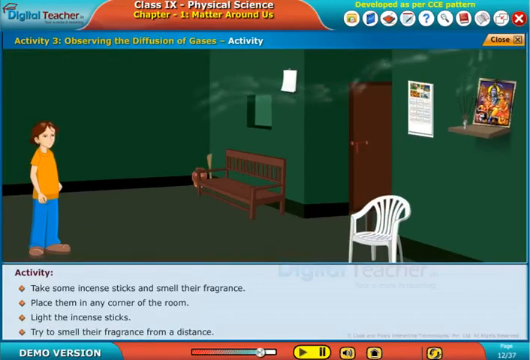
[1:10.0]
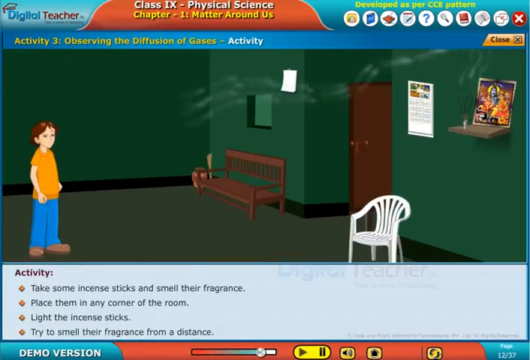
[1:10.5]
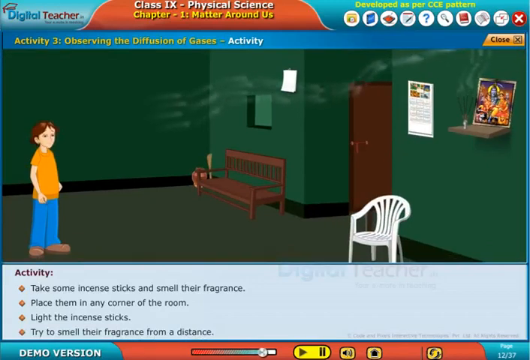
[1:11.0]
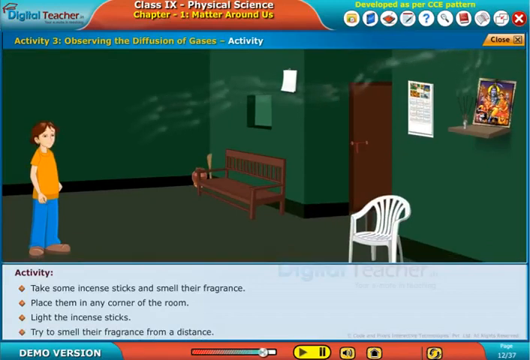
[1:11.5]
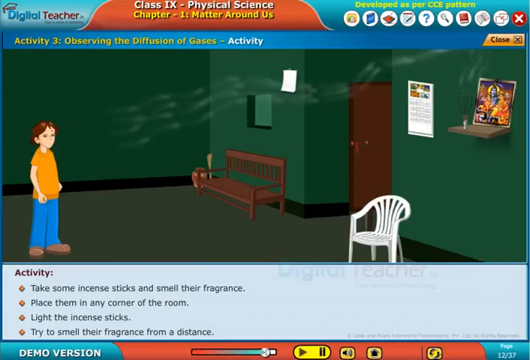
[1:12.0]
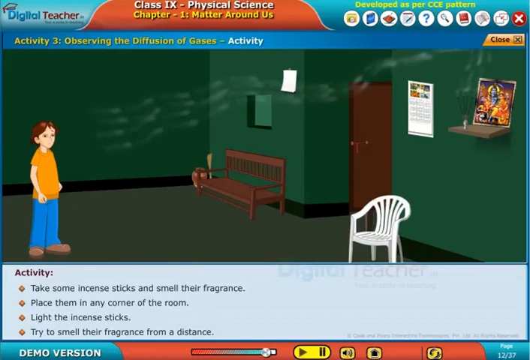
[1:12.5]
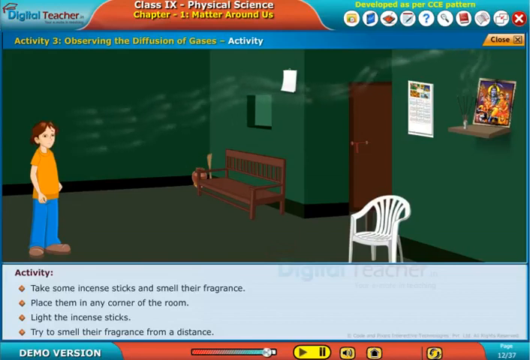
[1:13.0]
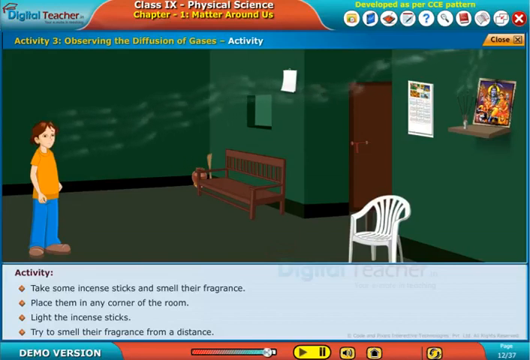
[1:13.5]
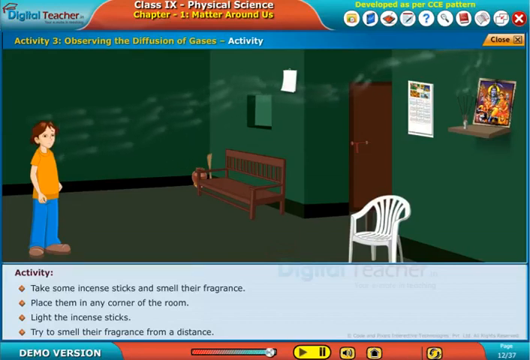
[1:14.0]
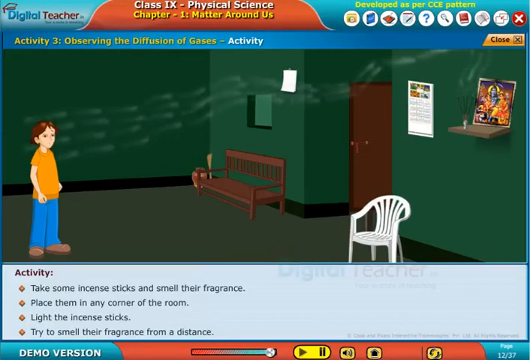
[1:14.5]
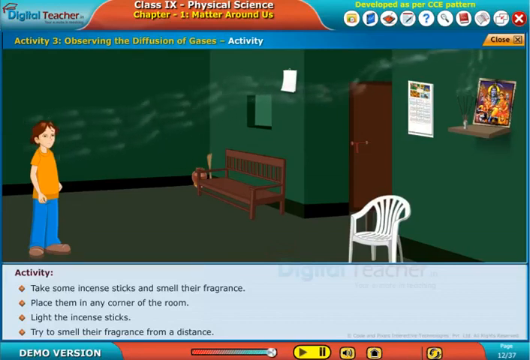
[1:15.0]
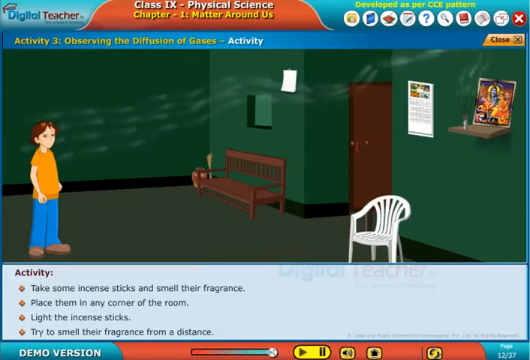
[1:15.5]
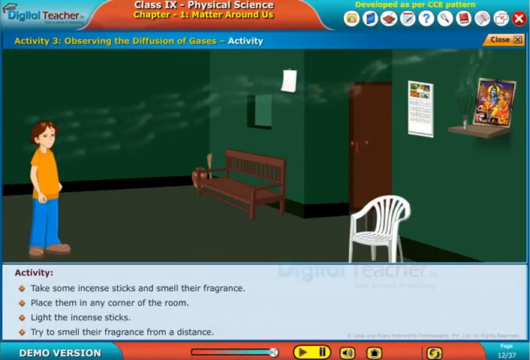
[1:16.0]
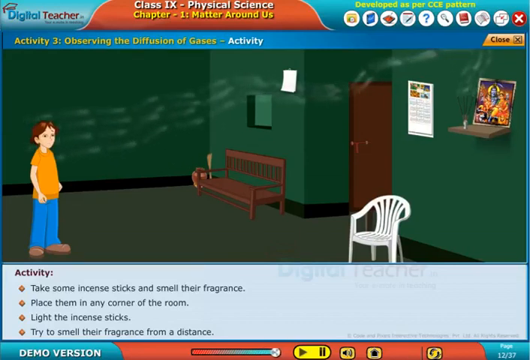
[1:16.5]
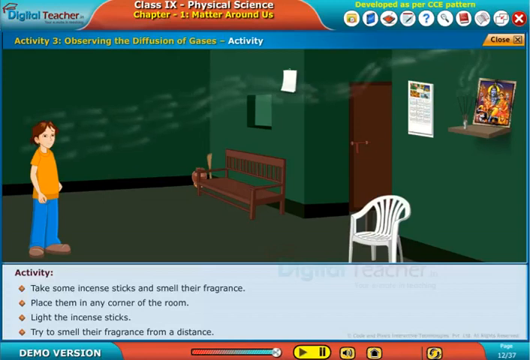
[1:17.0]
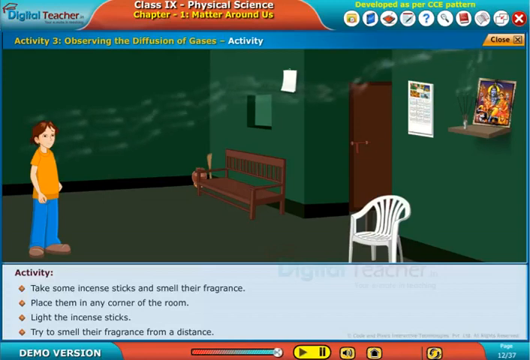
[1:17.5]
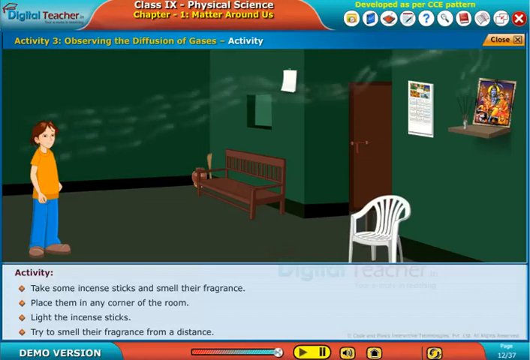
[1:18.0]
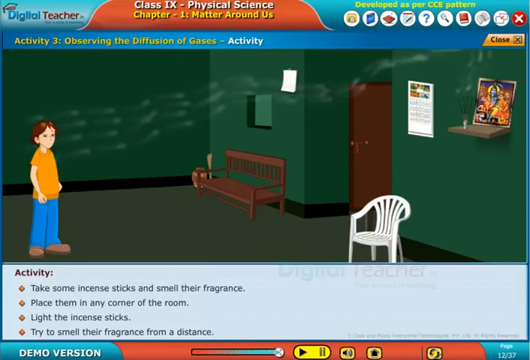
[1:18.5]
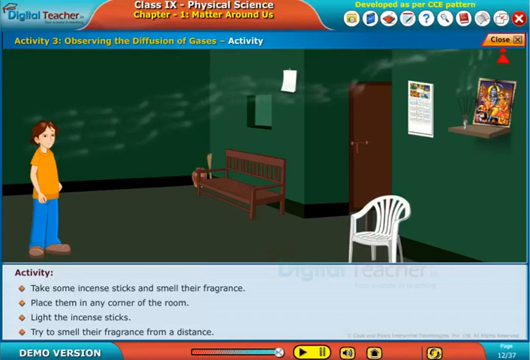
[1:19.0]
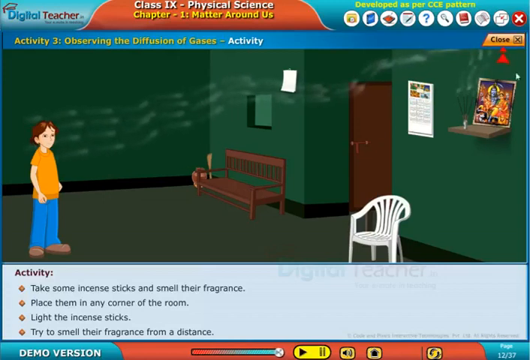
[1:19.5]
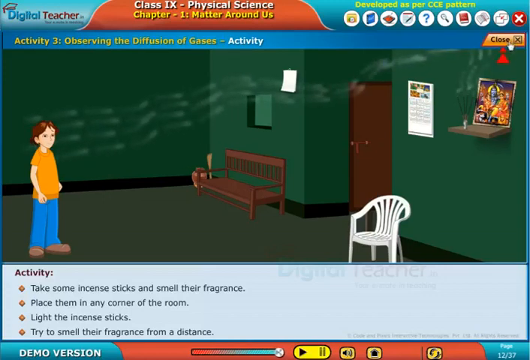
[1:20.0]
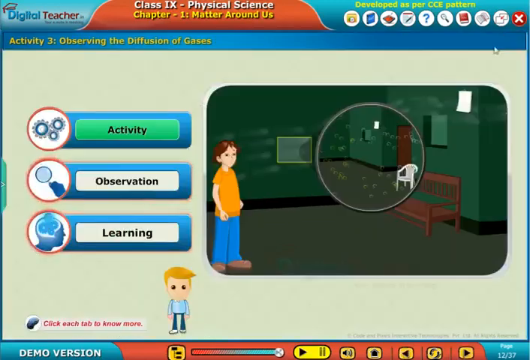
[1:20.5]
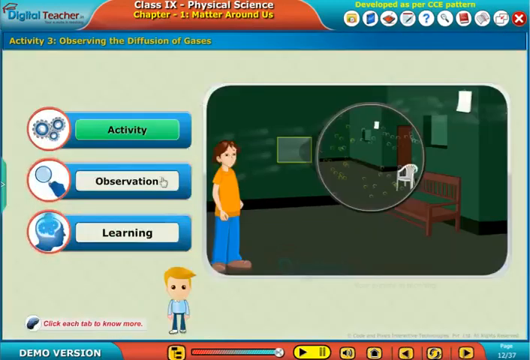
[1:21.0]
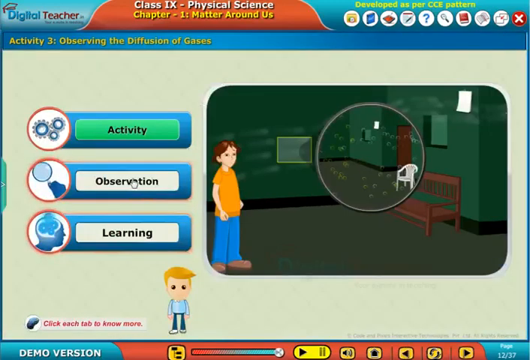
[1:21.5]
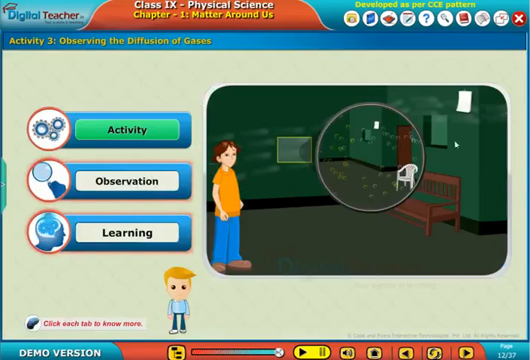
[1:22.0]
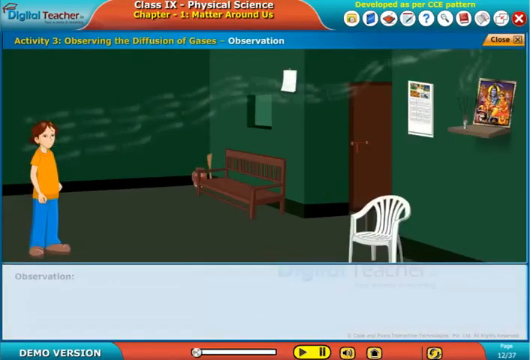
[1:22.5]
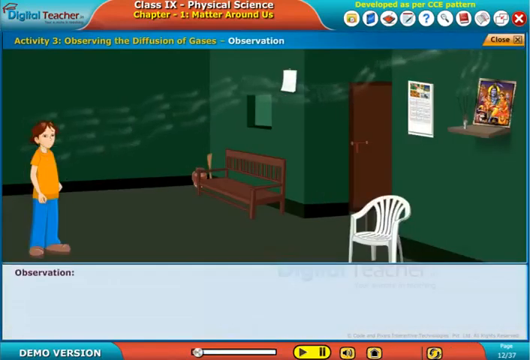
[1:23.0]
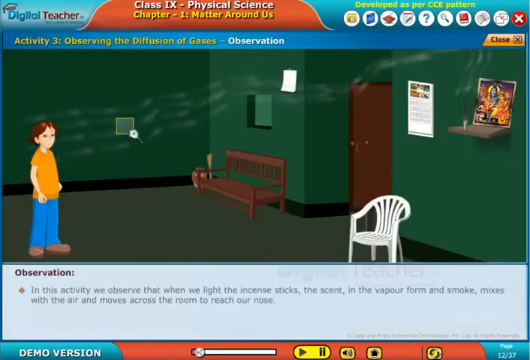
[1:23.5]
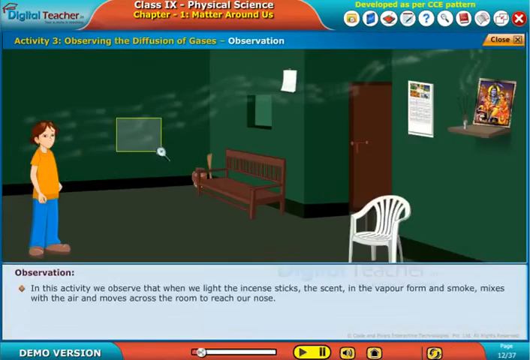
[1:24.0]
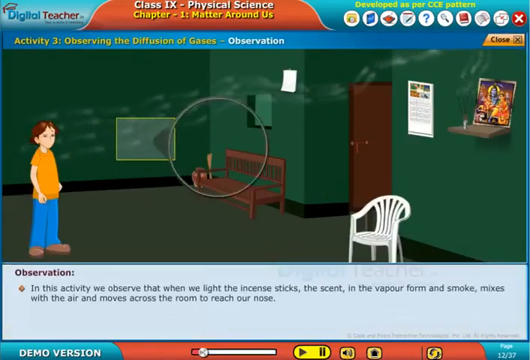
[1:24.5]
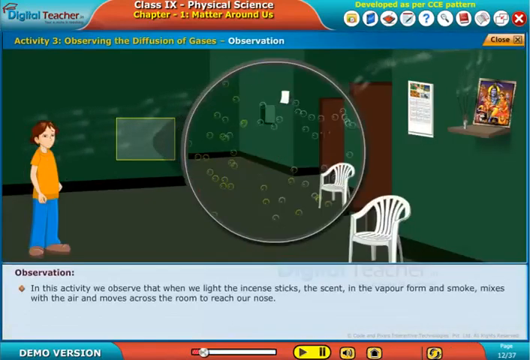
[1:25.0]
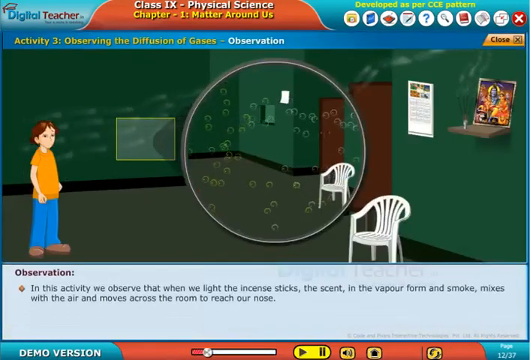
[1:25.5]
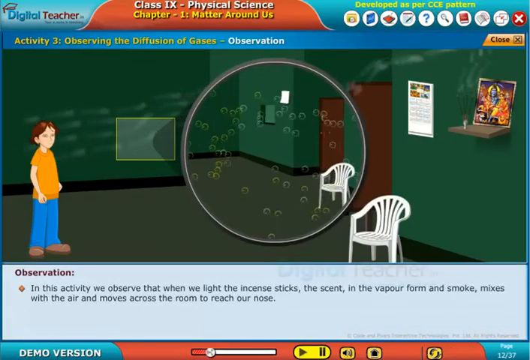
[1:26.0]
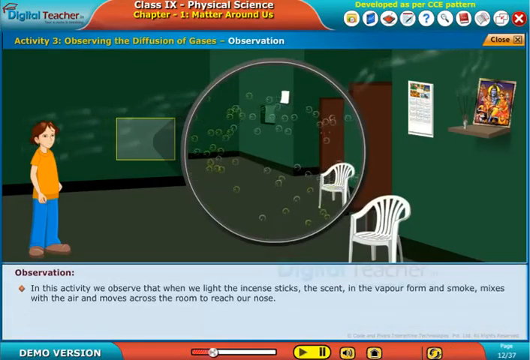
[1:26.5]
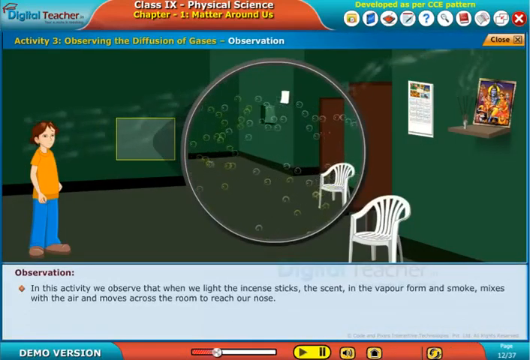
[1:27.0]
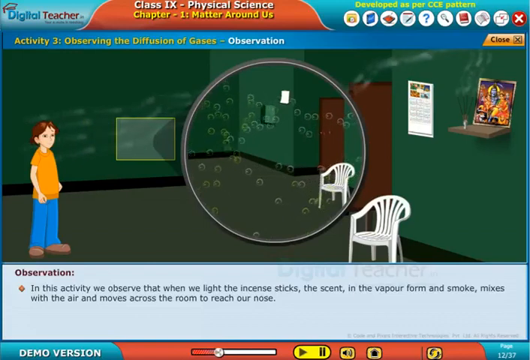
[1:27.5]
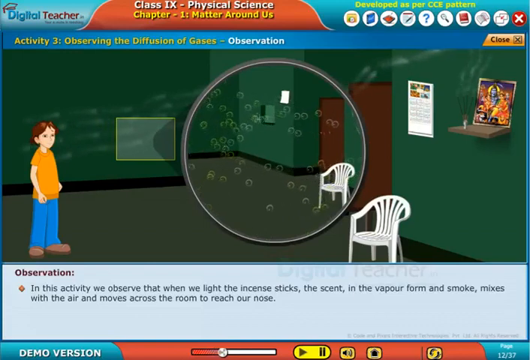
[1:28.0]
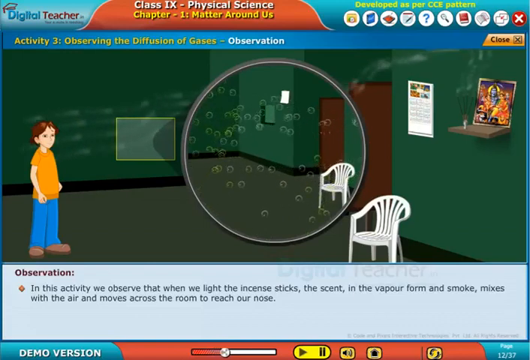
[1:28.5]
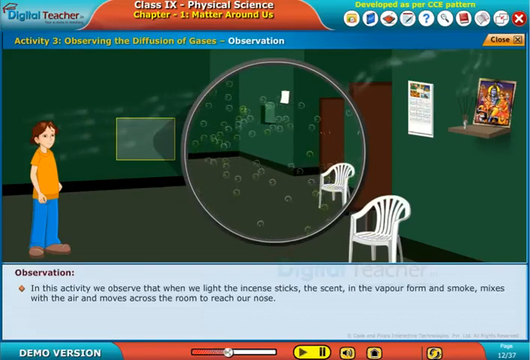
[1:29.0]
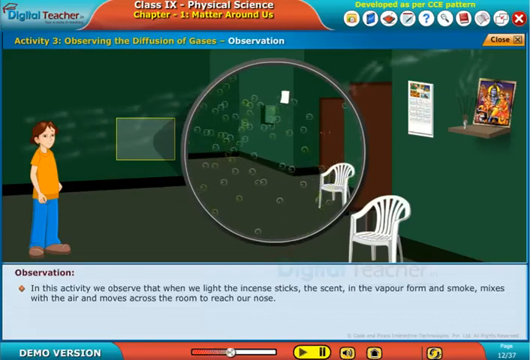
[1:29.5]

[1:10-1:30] The screen shows "activity three, observing the diffusion of gases." On the right, a calendar hangs on the wall, and a shelf is inserted into the wall with a frame of three people. Also on the right hand side a white paper hangs; just below it is an opening that looks like a window, and below that is a brown bench. Next to the brown bench is a vase on the floor. The person stands at the centre of the room, looking toward the right side. At the bottom is a white chair, and on the shelf four incense sticks are placed in a container. Smoke from the incense comes straight to the person standing at the centre of the room. Then a big circle with bubbles floating in it appears and disappears.